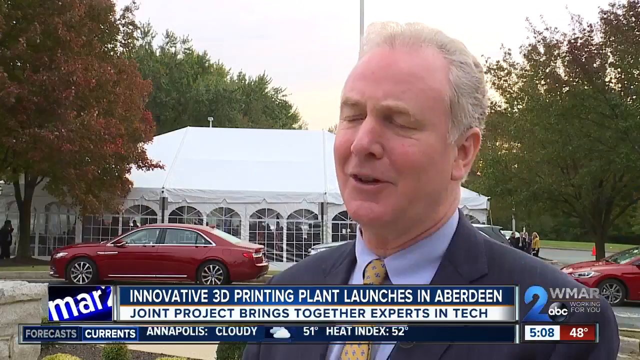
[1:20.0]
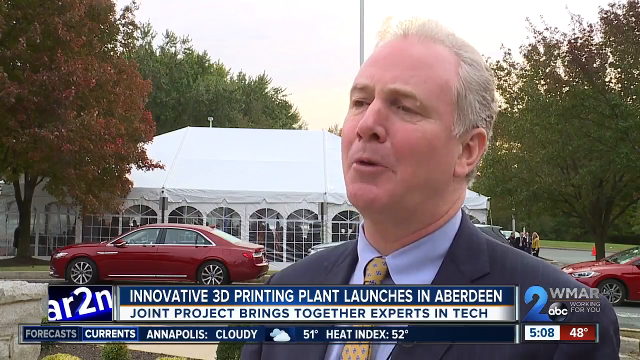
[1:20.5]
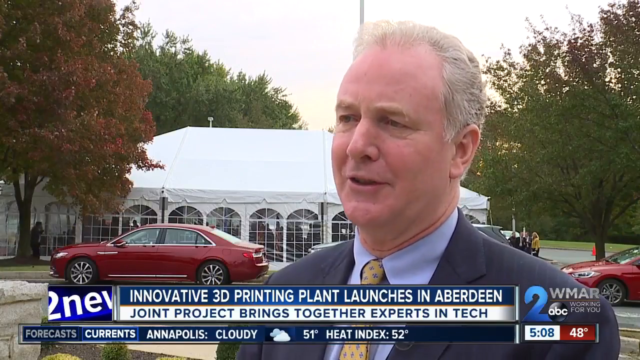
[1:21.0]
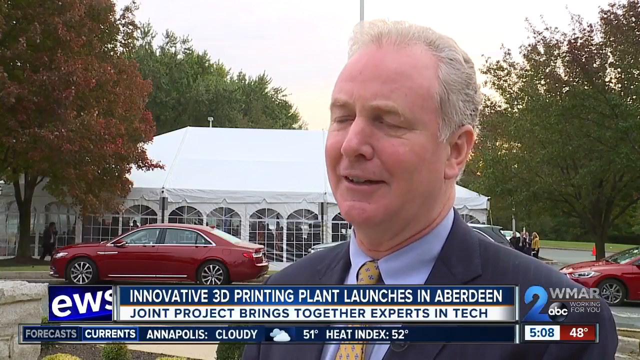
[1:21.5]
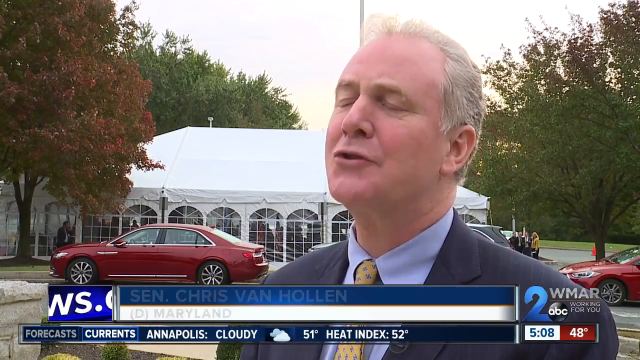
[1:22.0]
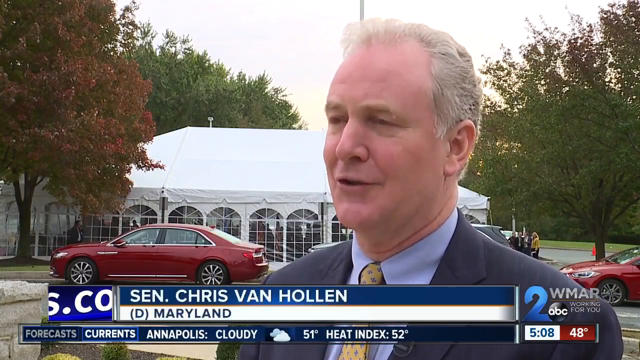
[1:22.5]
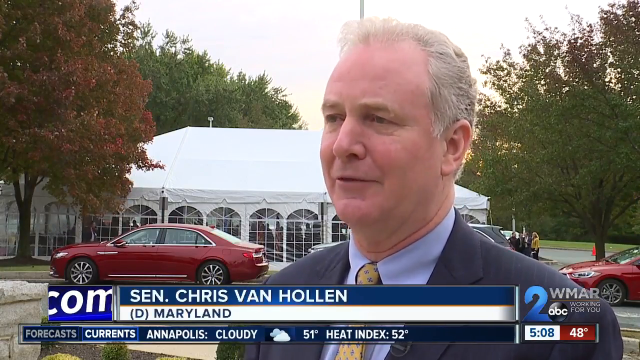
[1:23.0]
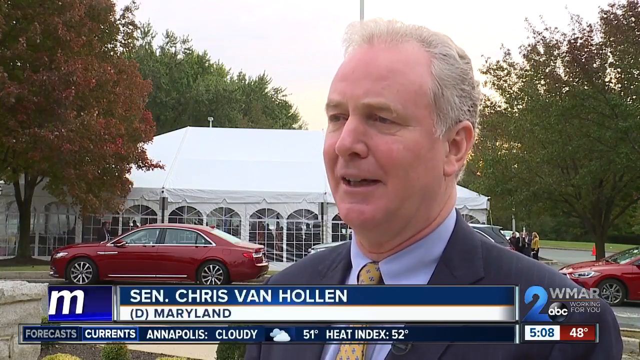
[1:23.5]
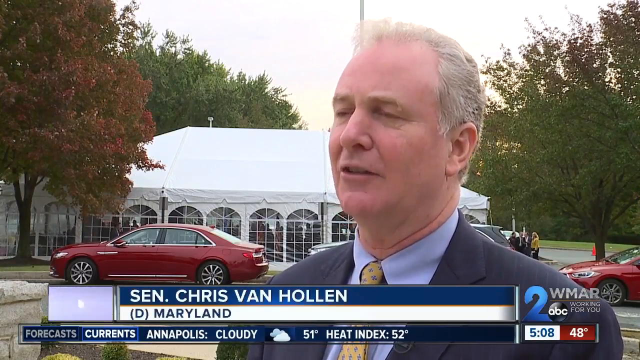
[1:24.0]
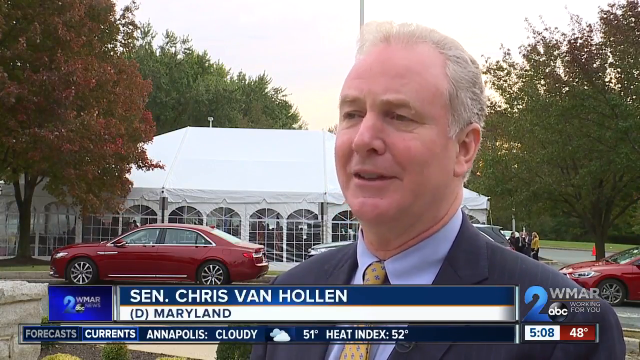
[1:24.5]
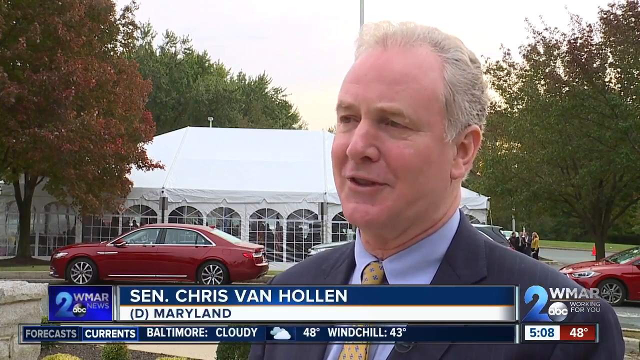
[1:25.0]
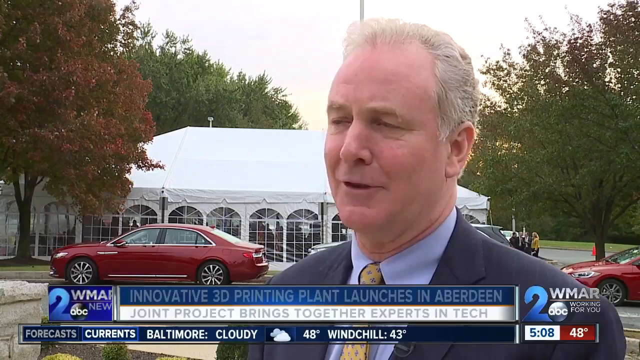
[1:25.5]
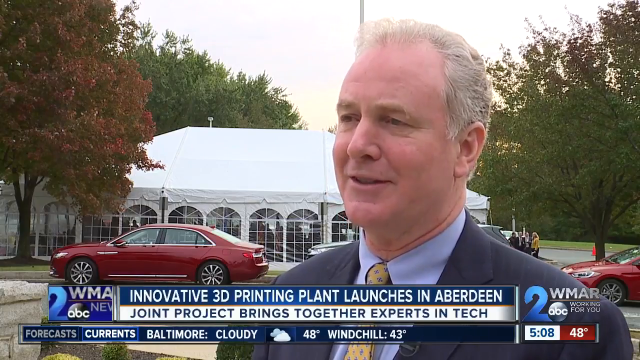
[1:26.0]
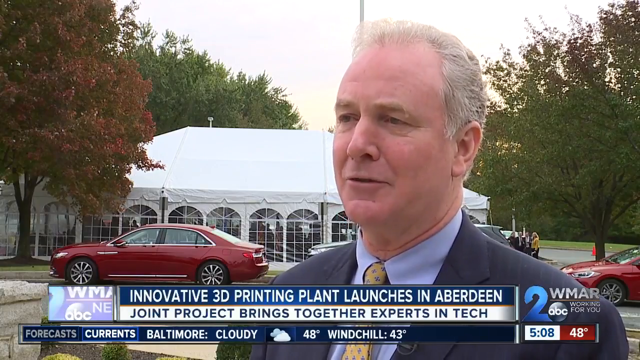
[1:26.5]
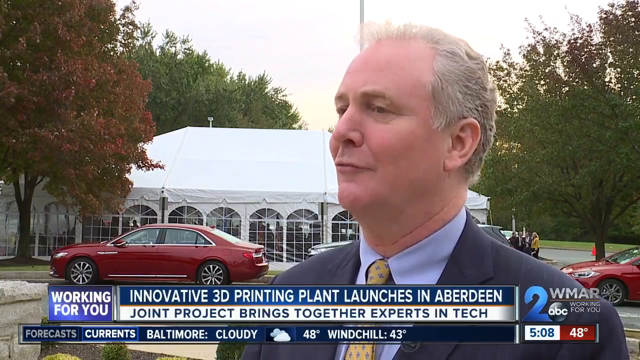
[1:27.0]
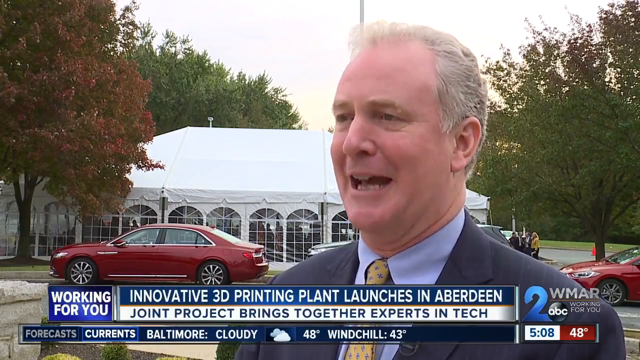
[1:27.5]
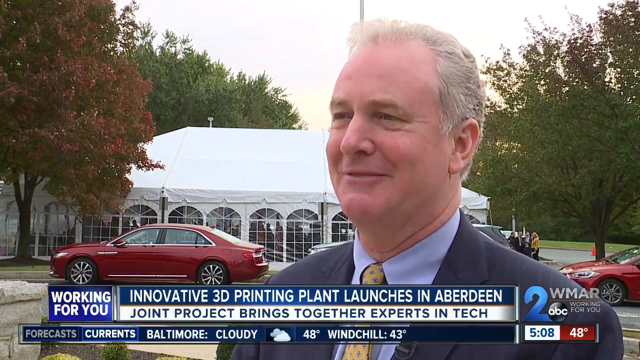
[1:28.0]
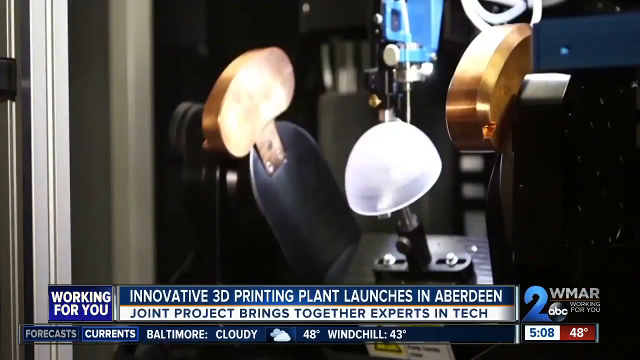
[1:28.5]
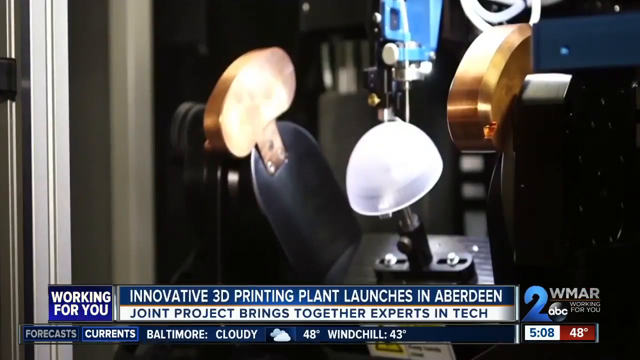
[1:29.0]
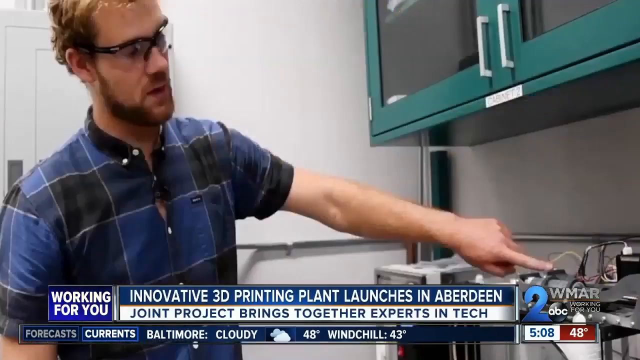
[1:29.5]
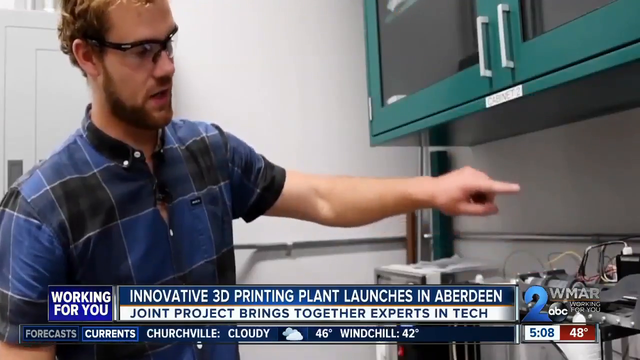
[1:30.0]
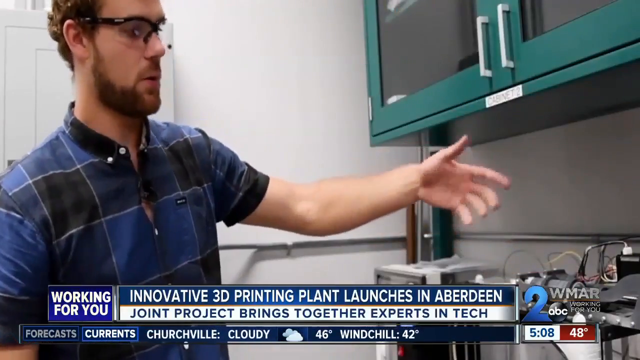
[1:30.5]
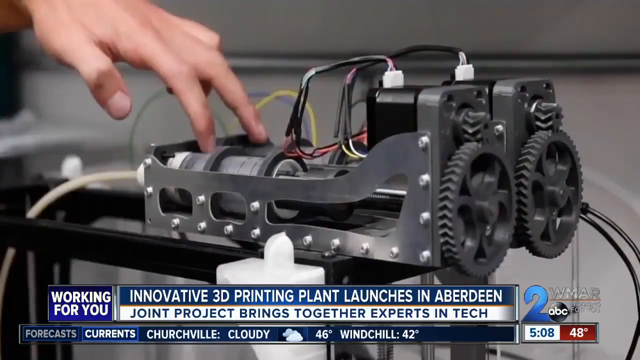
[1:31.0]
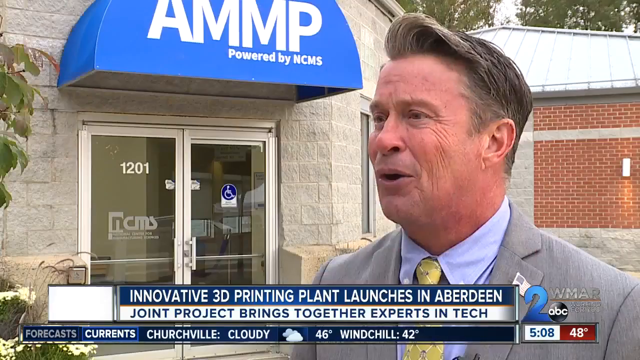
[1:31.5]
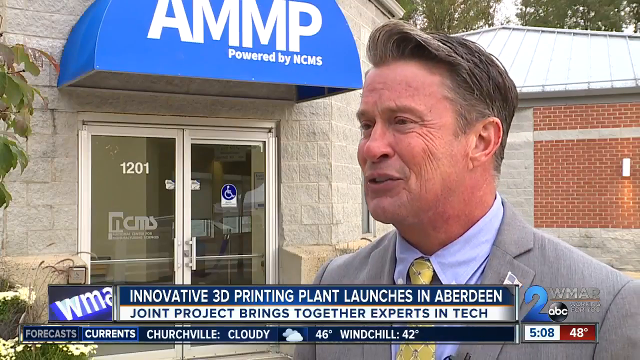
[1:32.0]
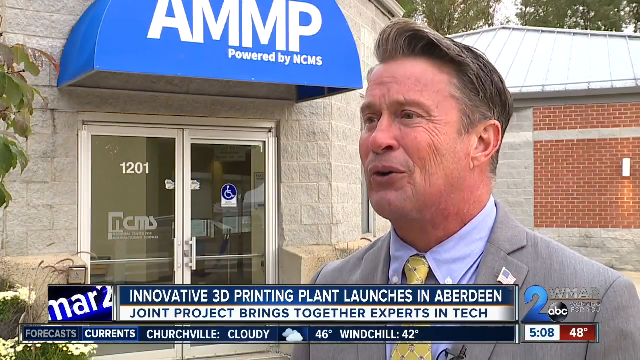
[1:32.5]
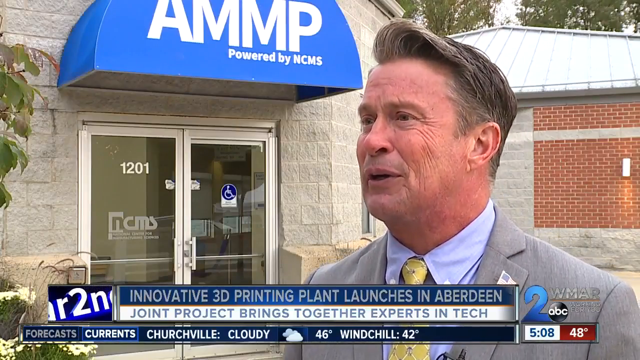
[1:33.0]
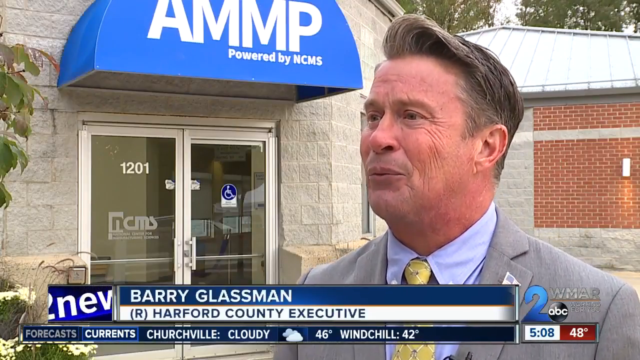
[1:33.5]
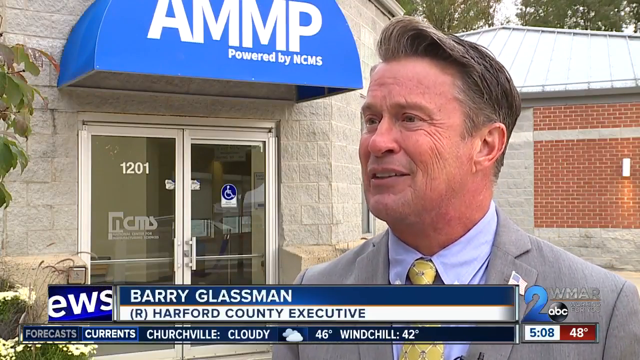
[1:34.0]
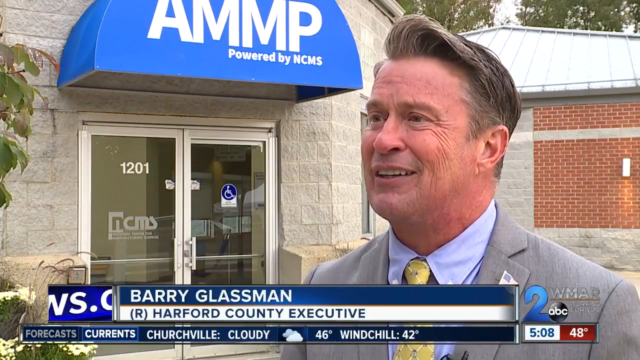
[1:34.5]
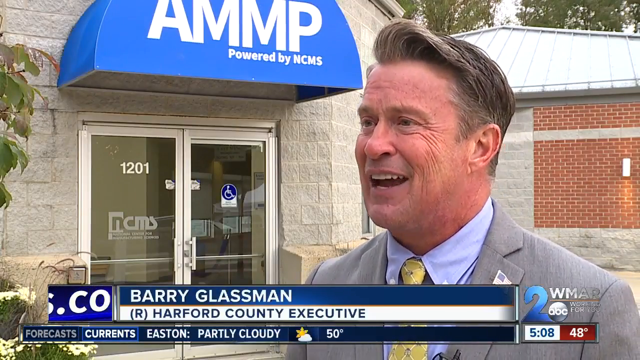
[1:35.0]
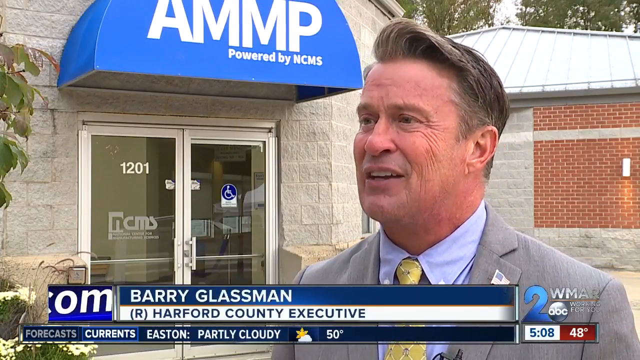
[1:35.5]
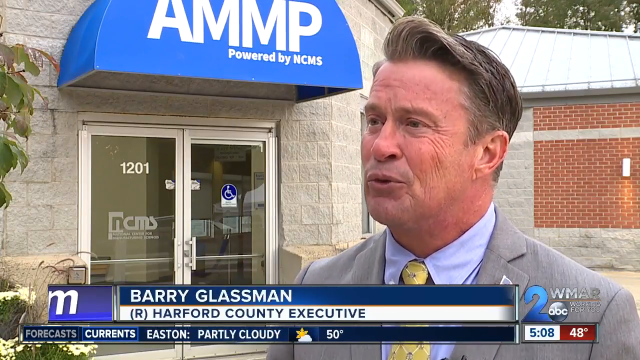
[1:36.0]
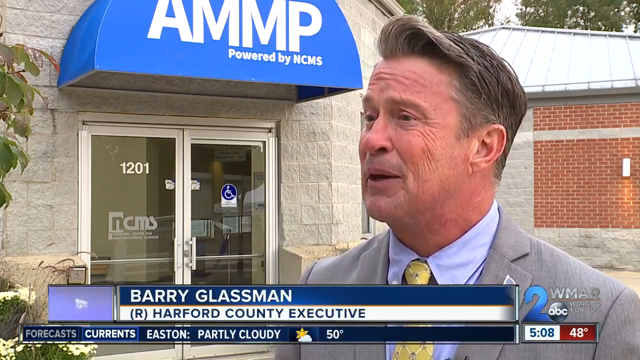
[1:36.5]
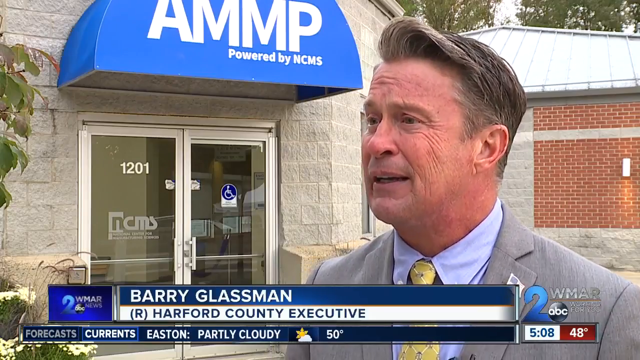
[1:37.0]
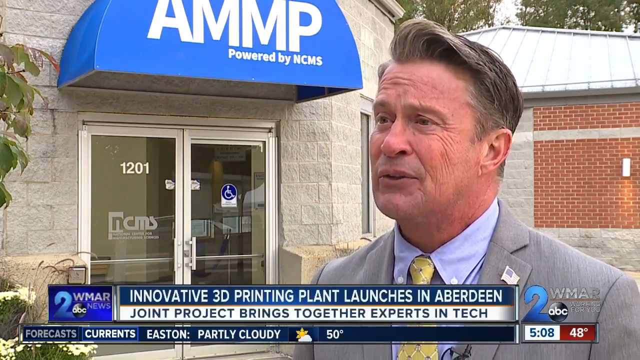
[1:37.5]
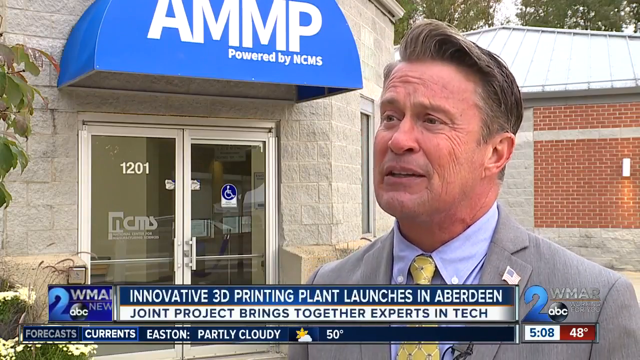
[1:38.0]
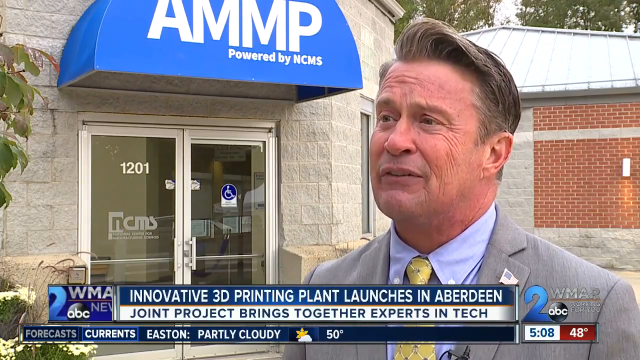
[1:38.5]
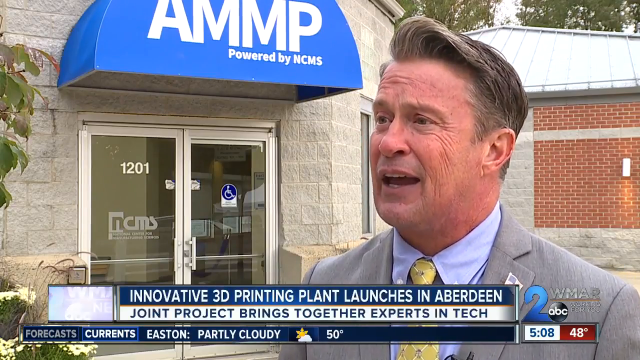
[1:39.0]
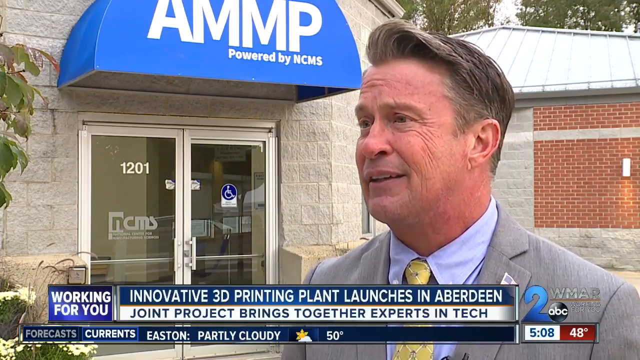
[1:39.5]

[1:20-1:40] Reporter Mark Roper covers a story headlined "Innovative 3D printing plant launches in Aberdeen." Outside in the daytime there are trees and what looks like a white tent, and multiple windows with people inside are visible. Mark interviews Senator Charles Van Hollen, a Democrat of Maryland, who has mostly gray hair and wears a blue pinstripe suit, a lighter blue shirt and a necktie. The ticker below shows the time as 5:08 and the temperature as 48 degrees. The senator is happy, sharing openly and nodding. The scene moves inside the 3D printing plant, where a young man appears to be explaining some equipment on top of a table. It then cuts back outside to another interview, with another man in a business suit happily sharing with Mark outside the 3D printing plant, also in the daytime.